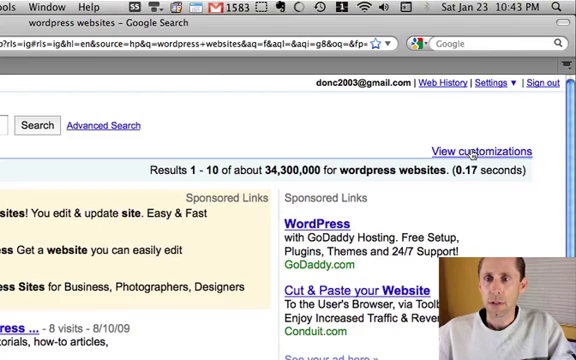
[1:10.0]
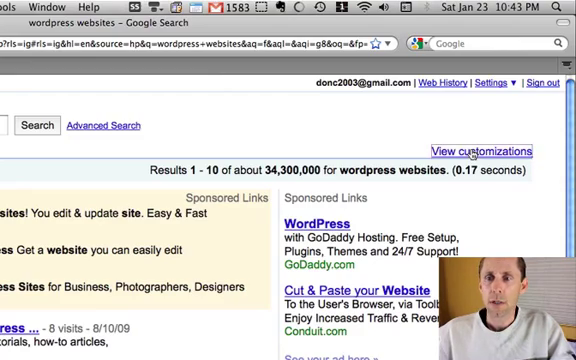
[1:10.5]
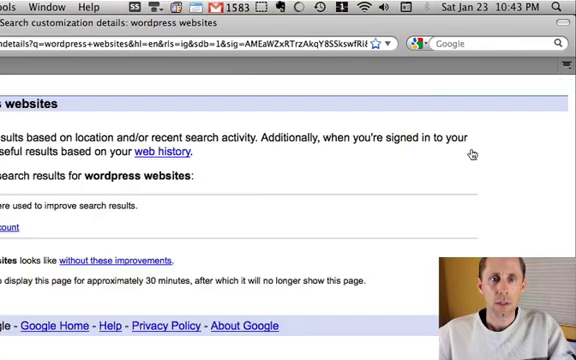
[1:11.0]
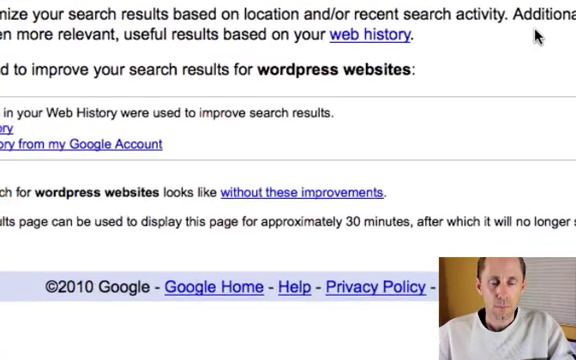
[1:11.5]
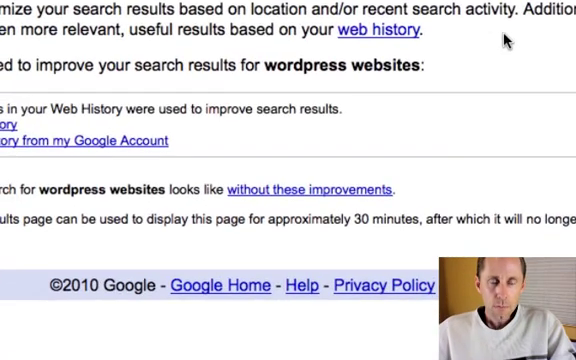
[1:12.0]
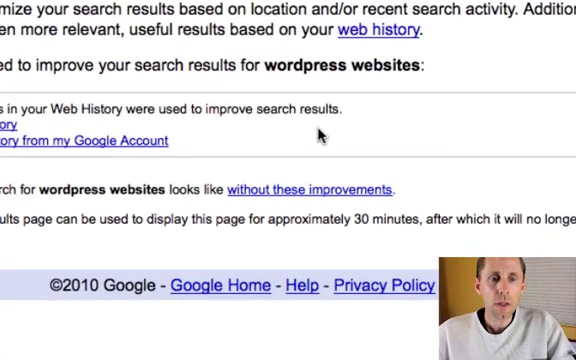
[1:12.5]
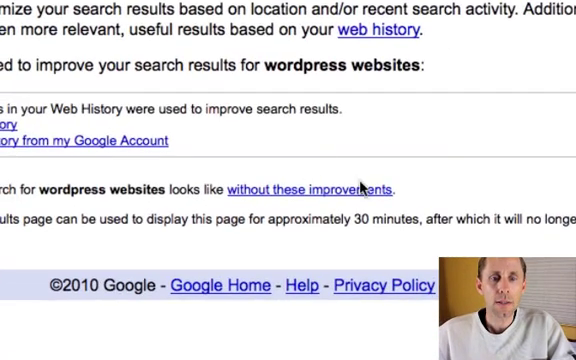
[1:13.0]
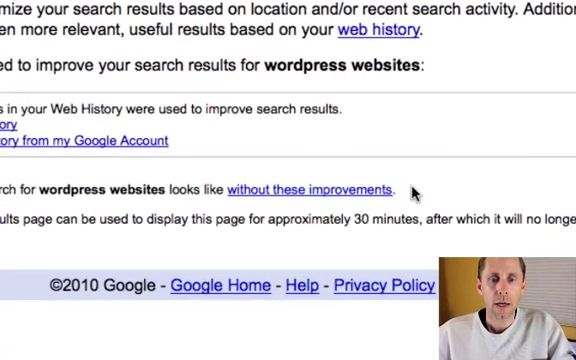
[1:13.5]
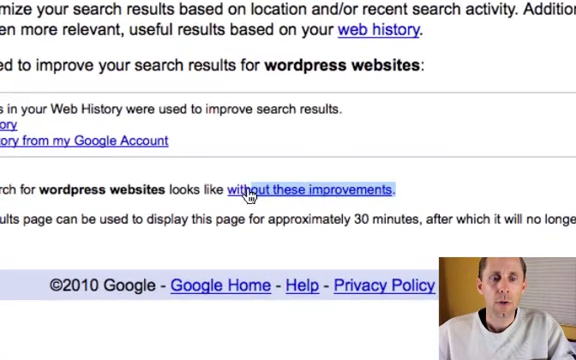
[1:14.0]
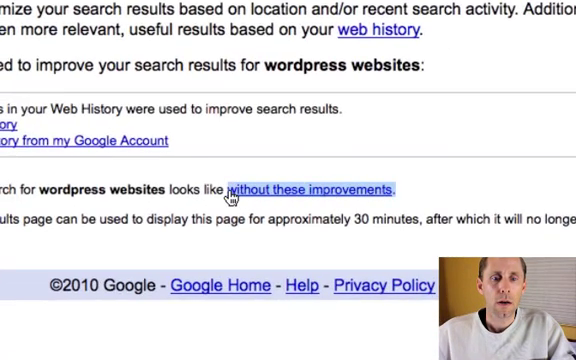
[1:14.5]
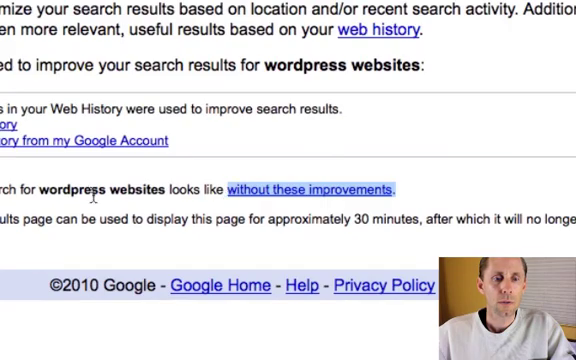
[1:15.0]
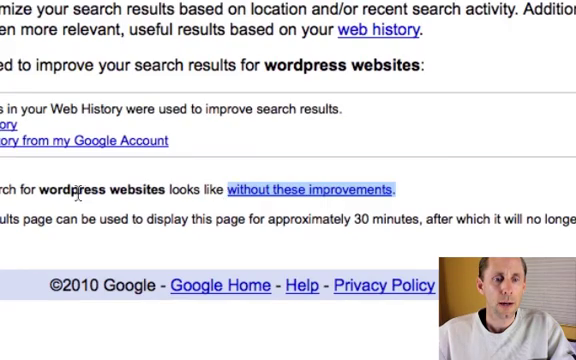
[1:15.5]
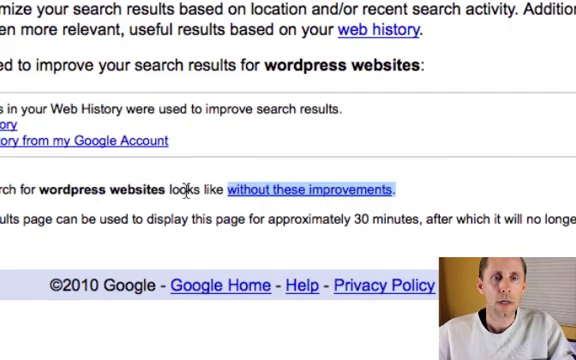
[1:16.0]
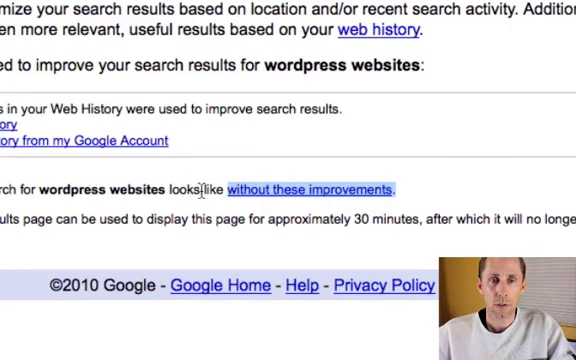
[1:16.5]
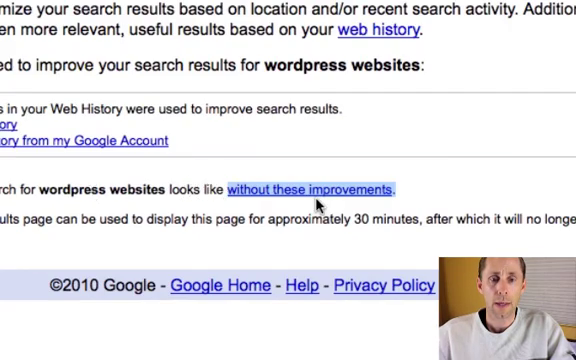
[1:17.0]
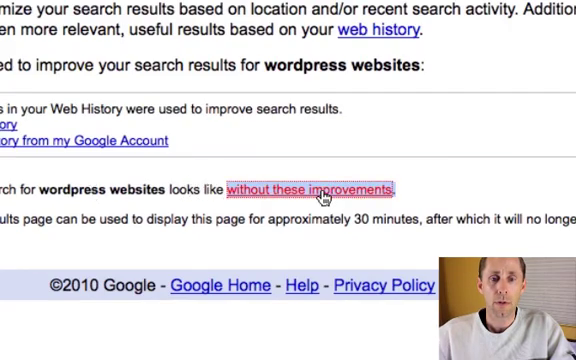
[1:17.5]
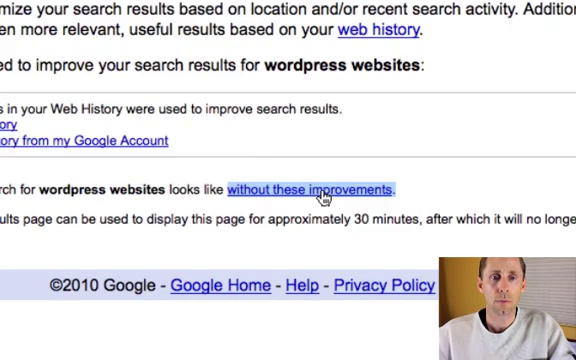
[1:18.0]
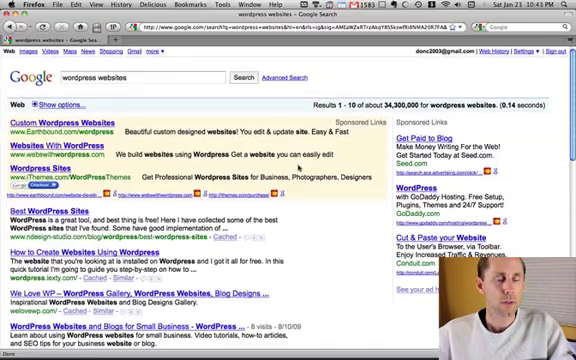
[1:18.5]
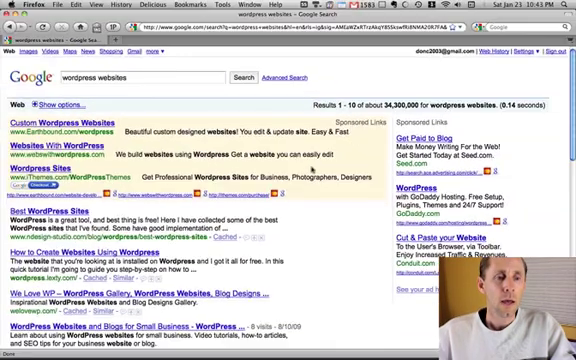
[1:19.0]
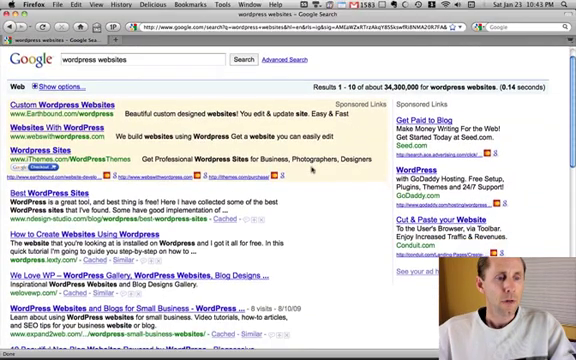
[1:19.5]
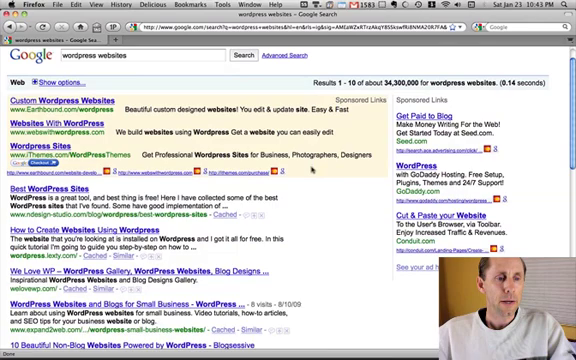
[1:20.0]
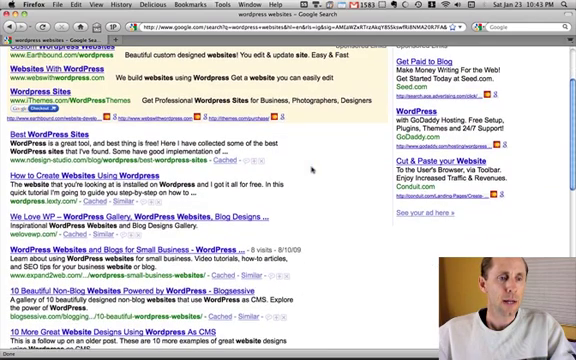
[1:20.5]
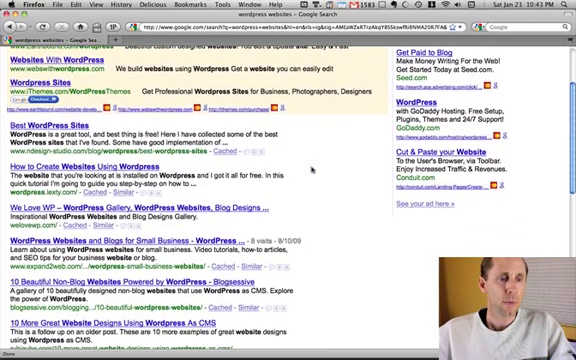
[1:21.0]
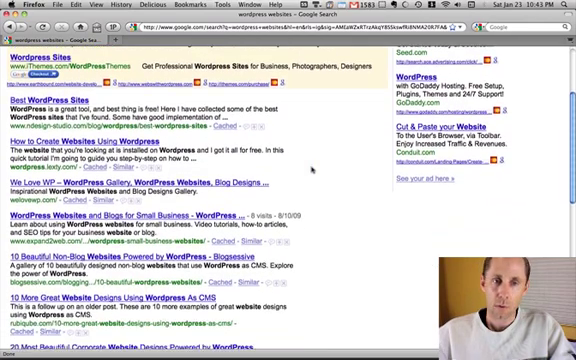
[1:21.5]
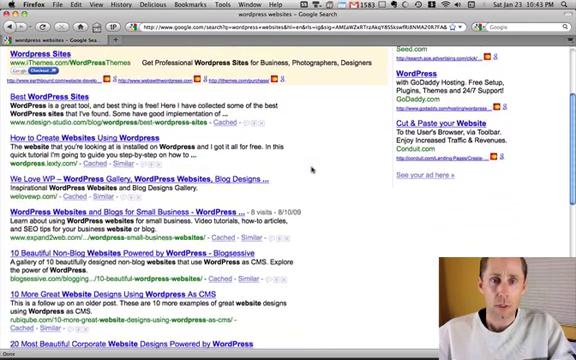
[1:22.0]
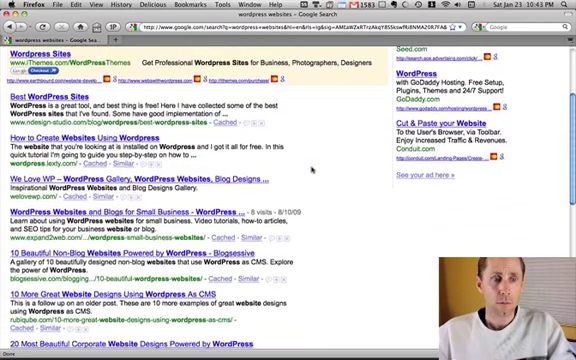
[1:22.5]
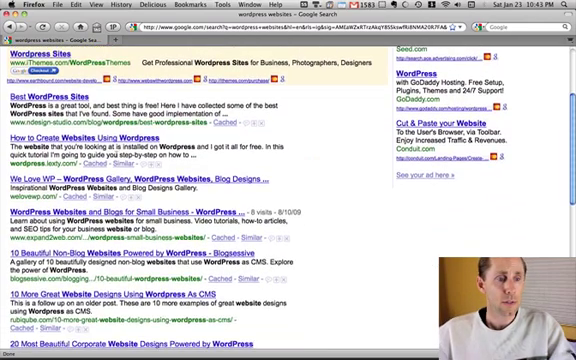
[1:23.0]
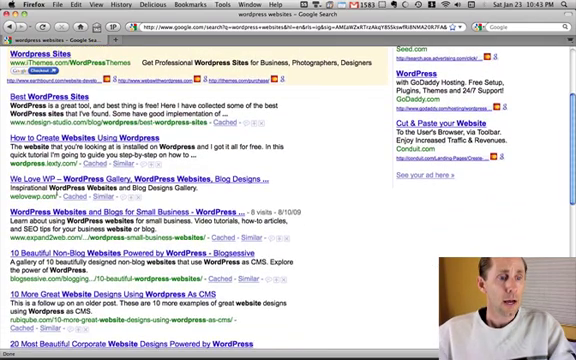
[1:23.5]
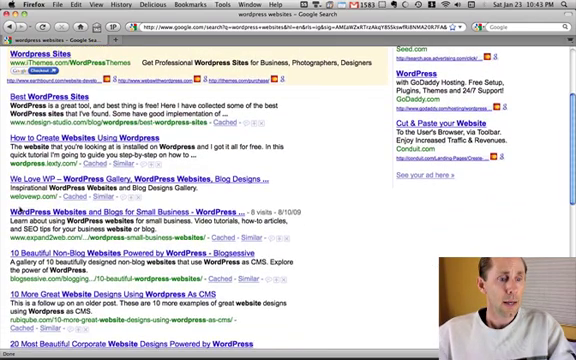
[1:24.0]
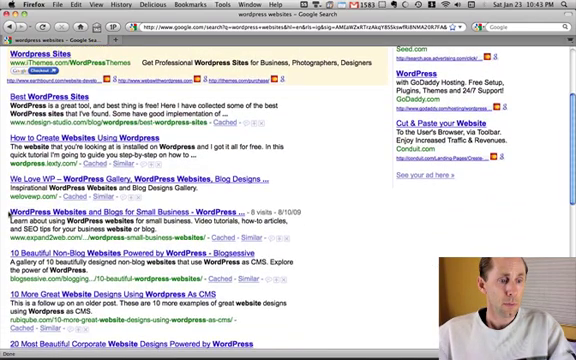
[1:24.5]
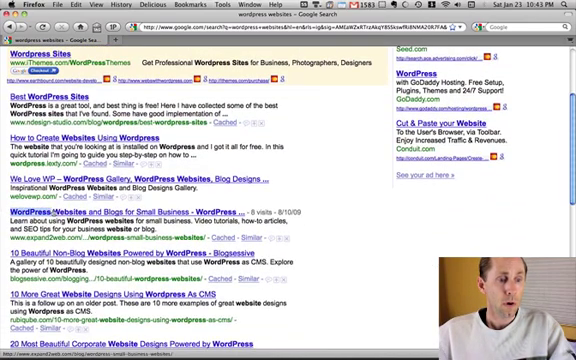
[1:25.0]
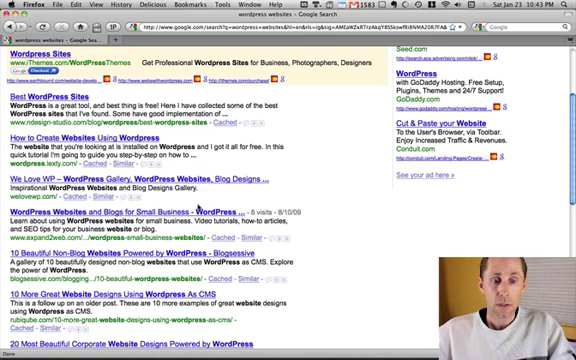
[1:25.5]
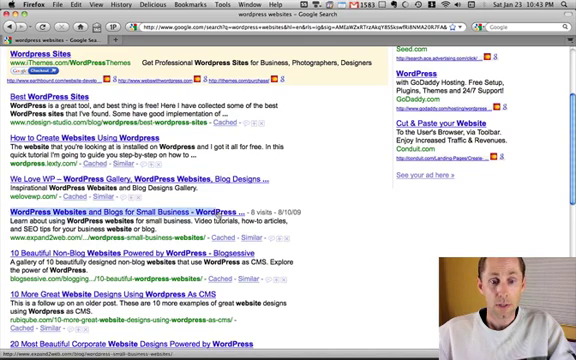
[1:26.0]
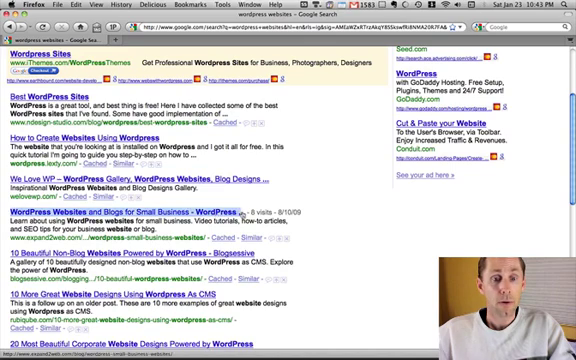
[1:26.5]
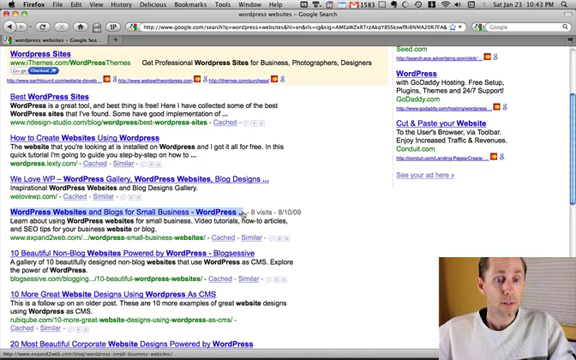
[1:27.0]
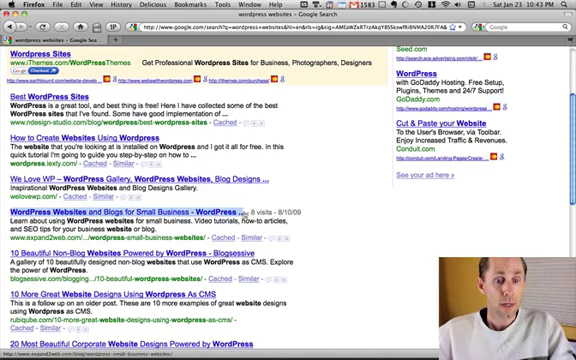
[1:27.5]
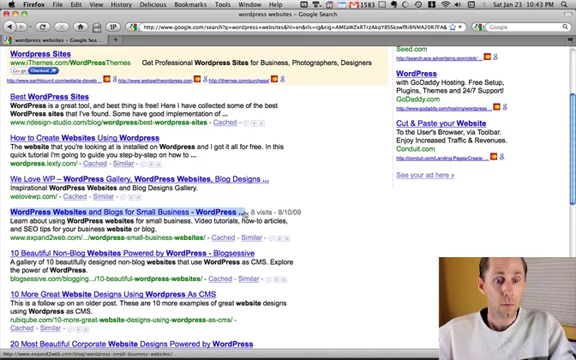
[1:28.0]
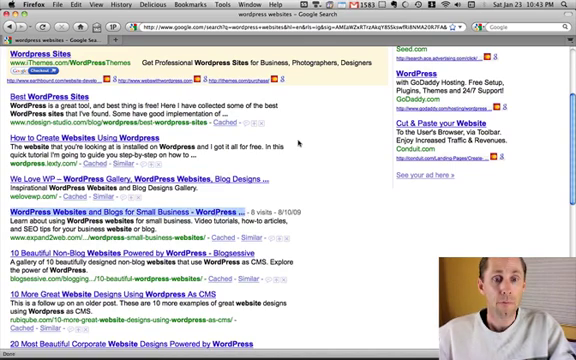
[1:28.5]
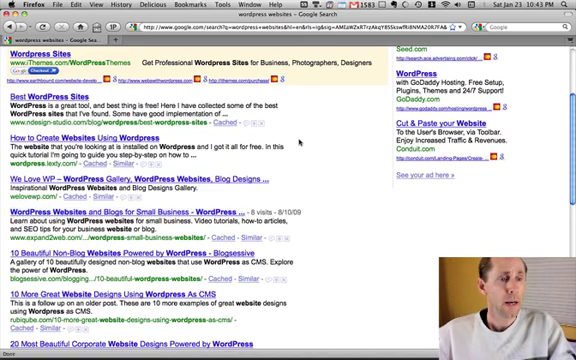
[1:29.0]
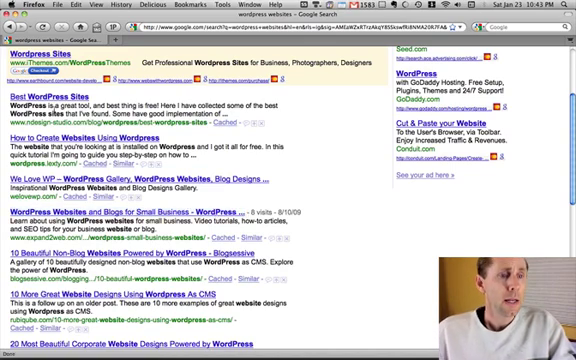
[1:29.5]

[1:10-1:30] The view is still zoomed in on the Firefox window in the upper right-hand side, with the man displayed in a smaller video box below. He clicks on "view customizations", which brings up a different display toward the bottom of the Google screen showing partial sentences due to the zoom level, about improved search results for WordPress websites, with an option to see the search for WordPress websites without the improvements. Below that is a Google copyright date of 2010. He highlights the words "without these improvements" and clicks on them, reloading the Google page. He scrolls down and starts highlighting the result set, showing that the results are now in a different order.